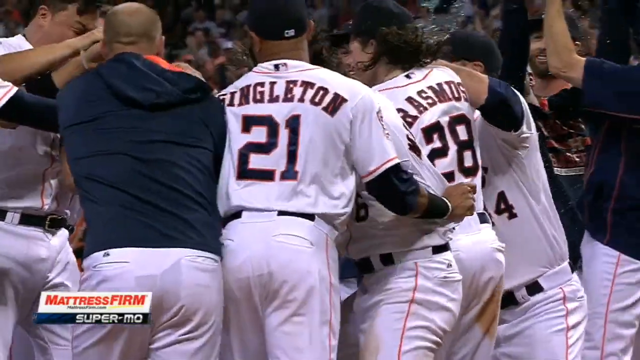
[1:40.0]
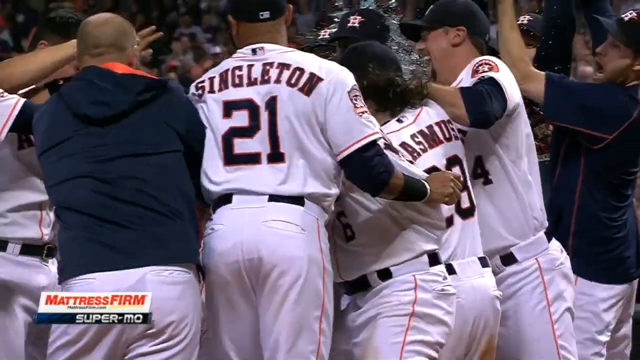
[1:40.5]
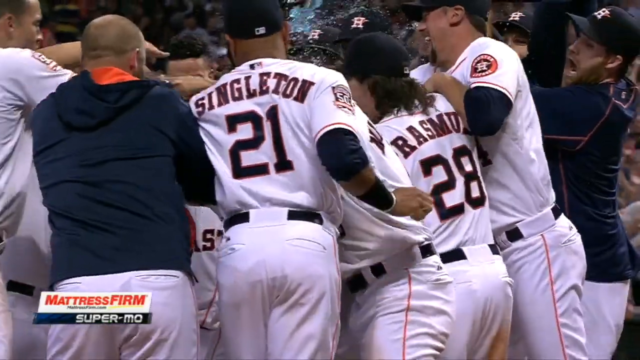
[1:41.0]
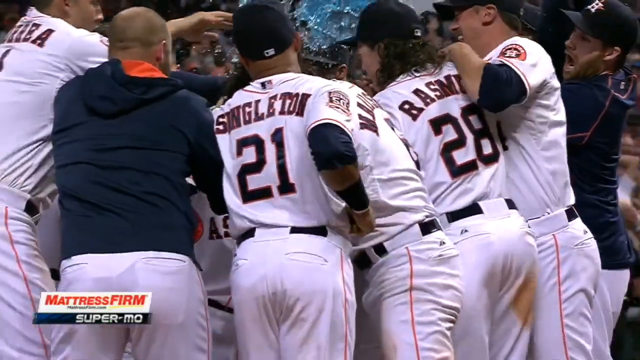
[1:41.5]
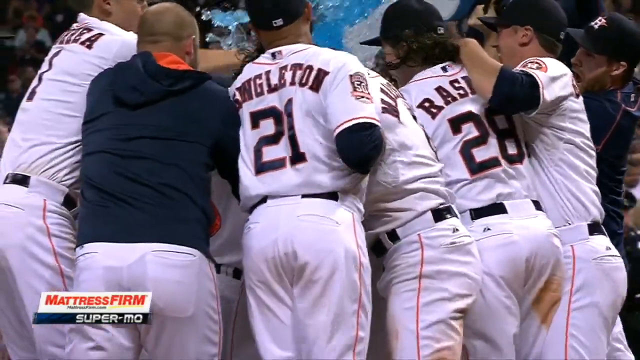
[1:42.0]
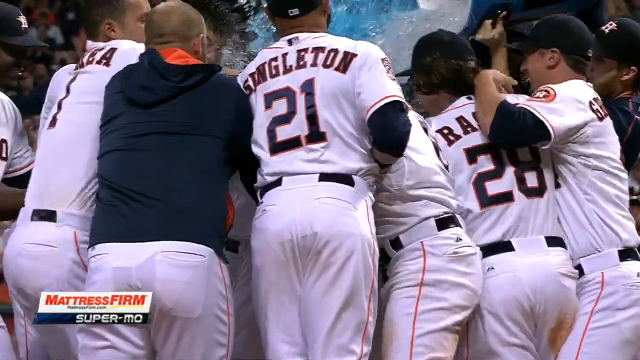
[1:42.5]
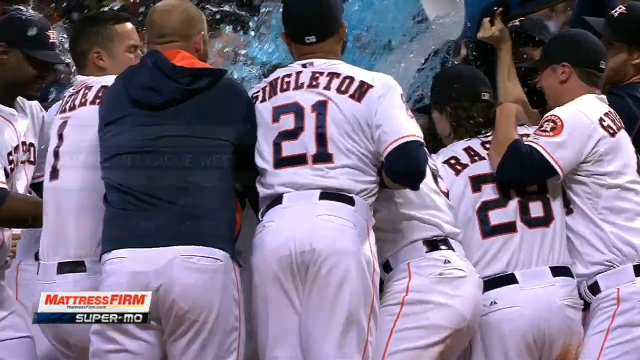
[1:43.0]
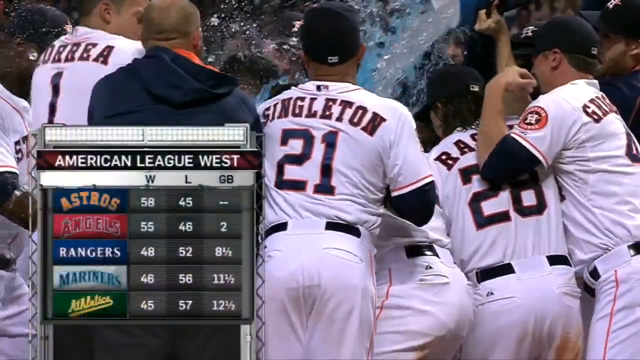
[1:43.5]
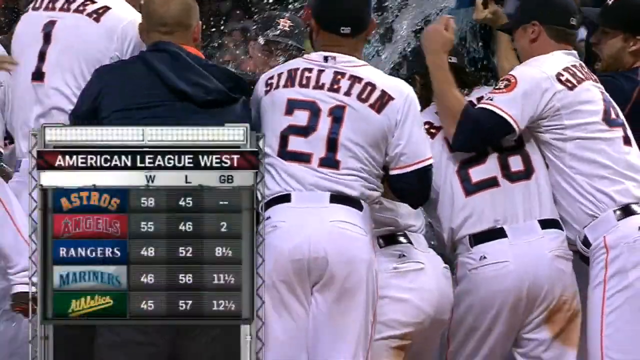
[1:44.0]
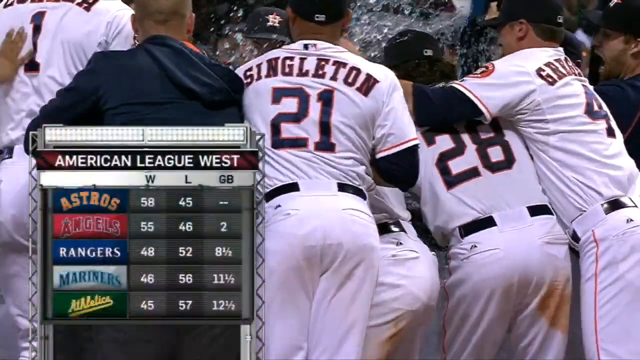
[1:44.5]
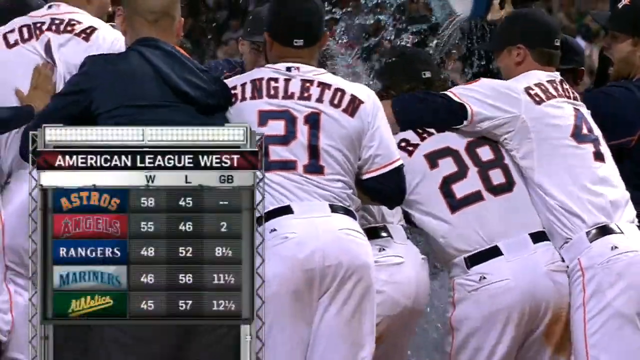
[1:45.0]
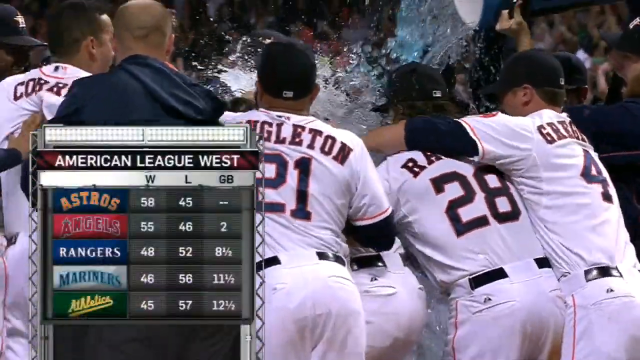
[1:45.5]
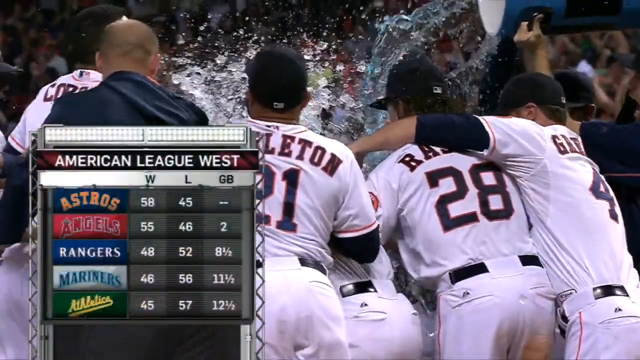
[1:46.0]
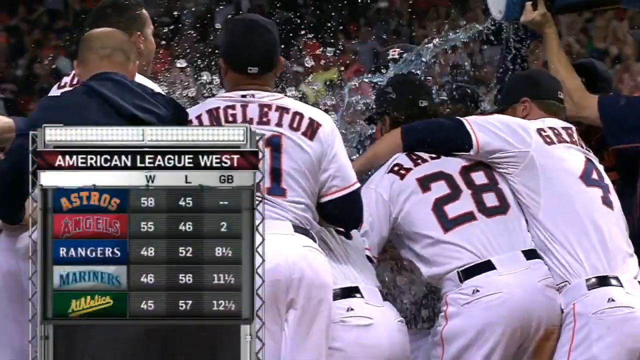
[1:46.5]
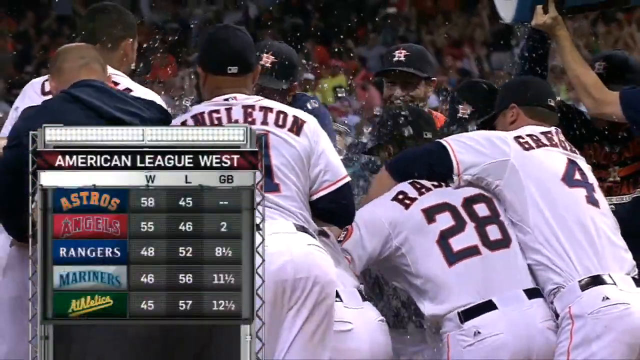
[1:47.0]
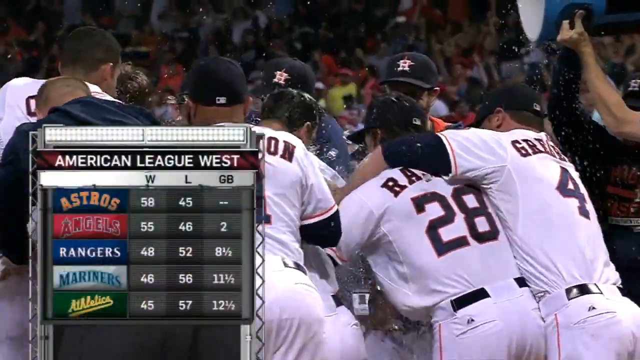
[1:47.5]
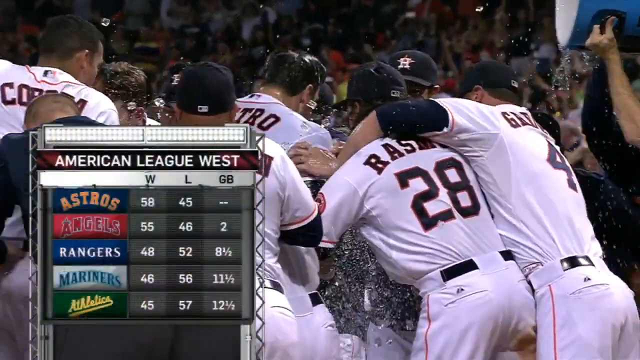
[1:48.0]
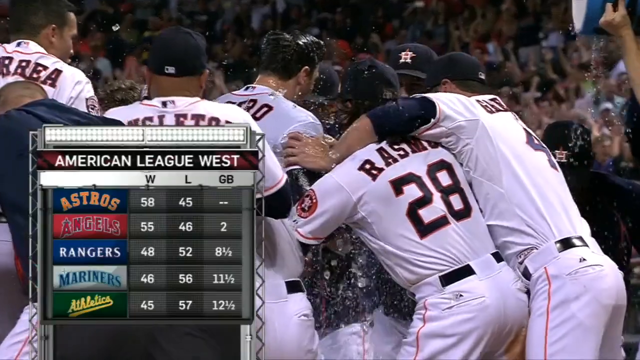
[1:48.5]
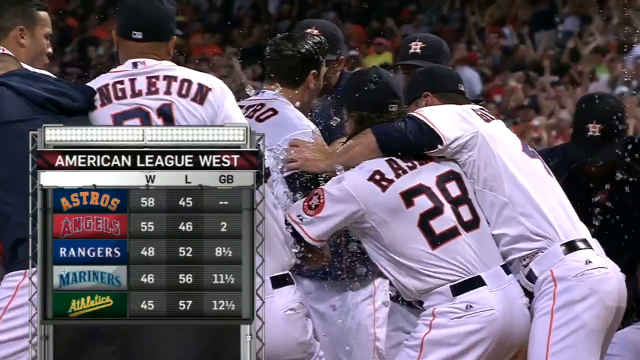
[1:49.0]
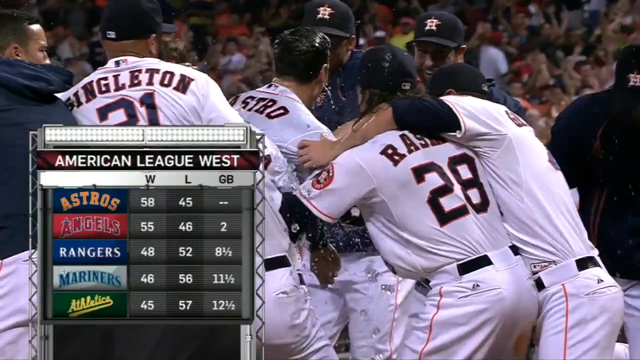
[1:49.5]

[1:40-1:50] Still in slow motion, the player crosses home plate as huge buckets of ice water and blue Gatorade are poured onto him. The Mattress Firm replay sponsorship appears in red lettering in a white box on the lower half of the screen. The view then shows the American League West, where the Astros have taken a two-game lead over the Angels for the top spot.